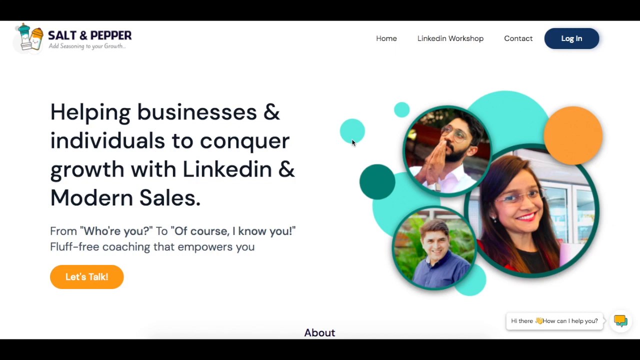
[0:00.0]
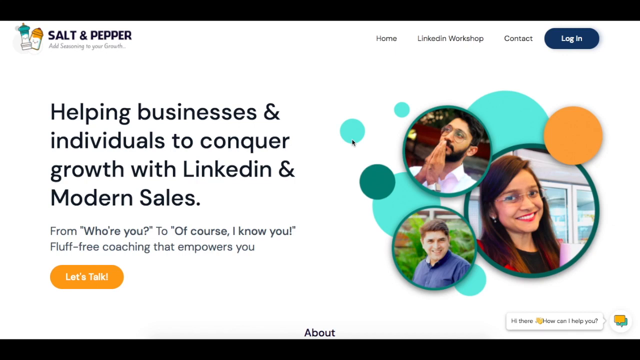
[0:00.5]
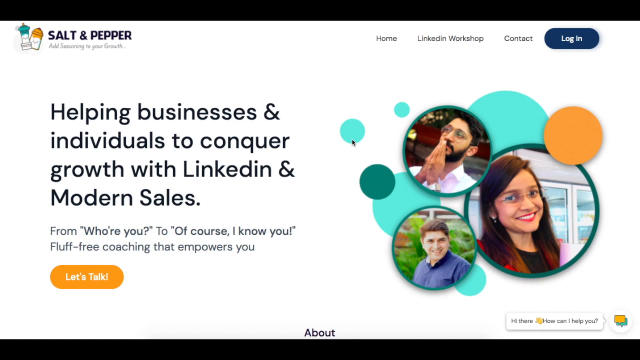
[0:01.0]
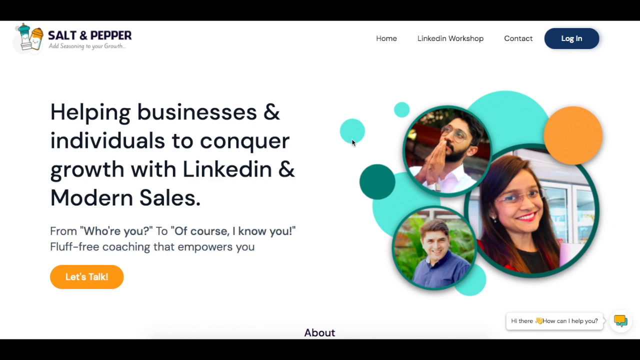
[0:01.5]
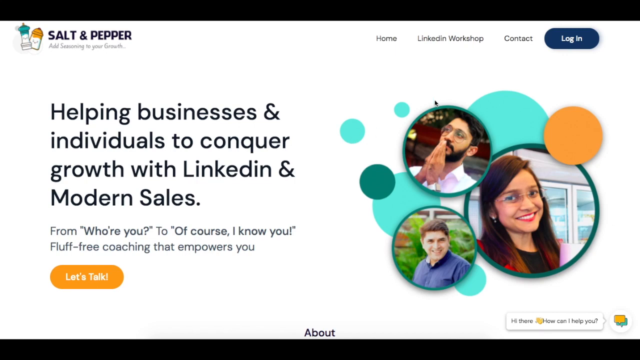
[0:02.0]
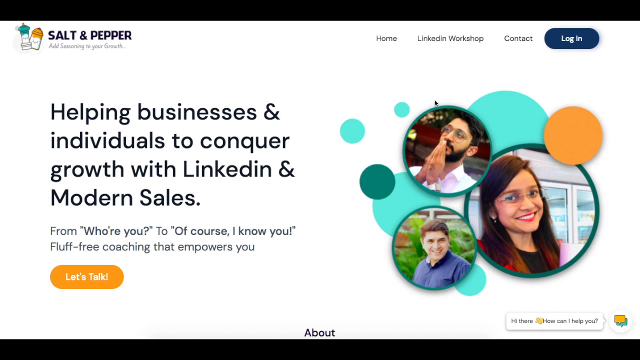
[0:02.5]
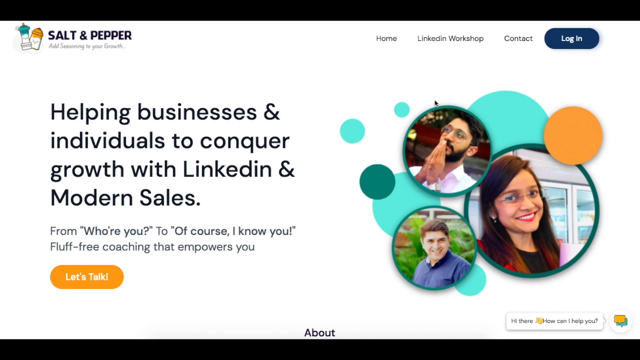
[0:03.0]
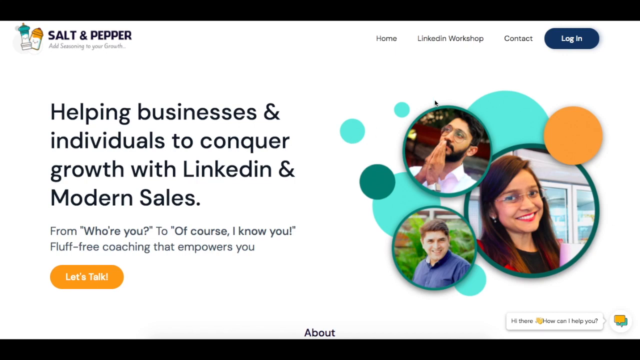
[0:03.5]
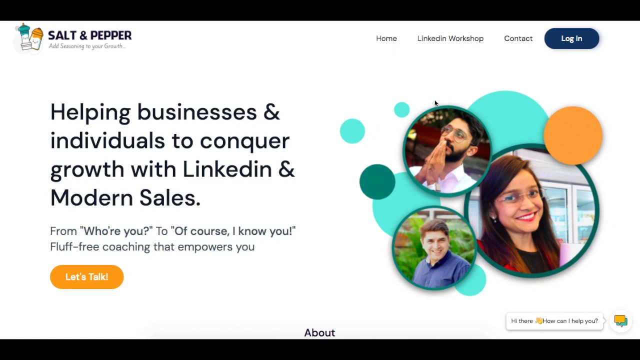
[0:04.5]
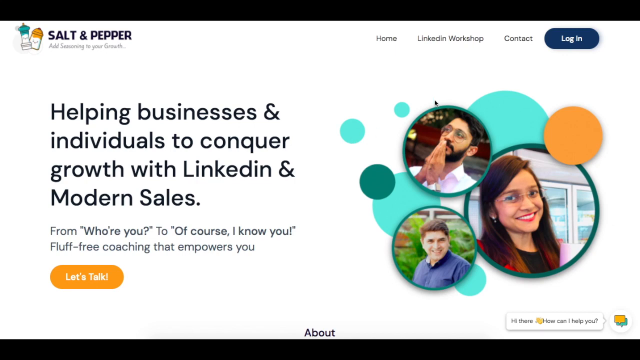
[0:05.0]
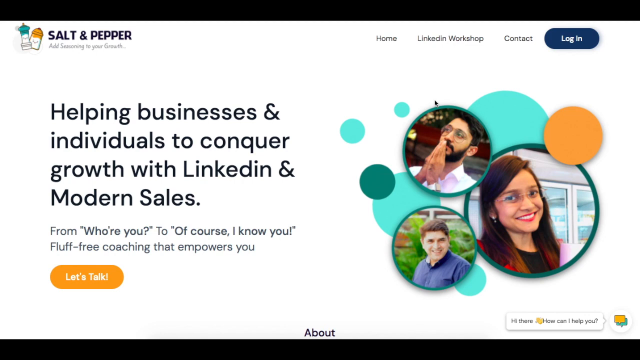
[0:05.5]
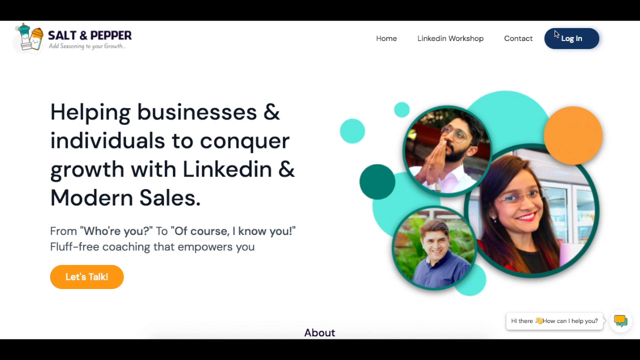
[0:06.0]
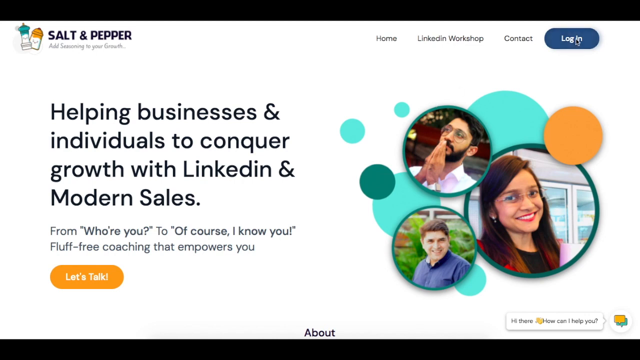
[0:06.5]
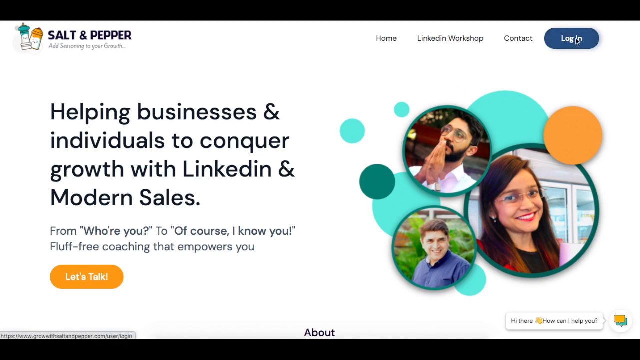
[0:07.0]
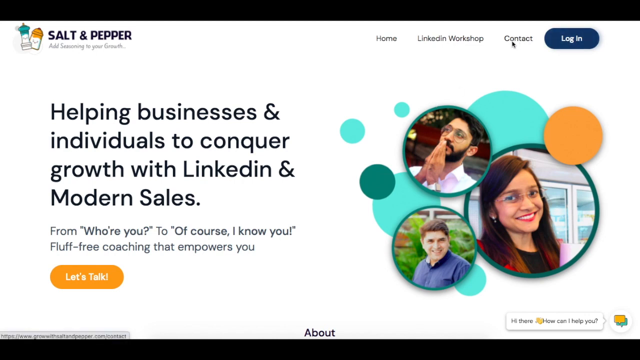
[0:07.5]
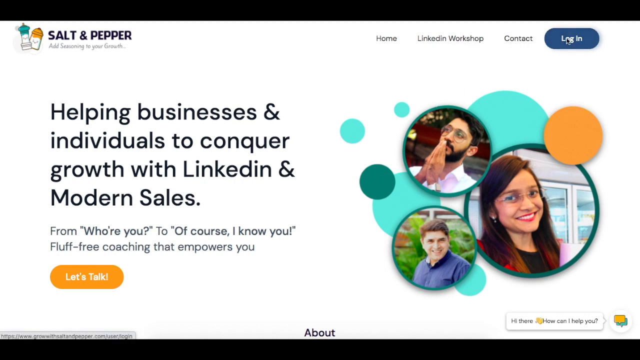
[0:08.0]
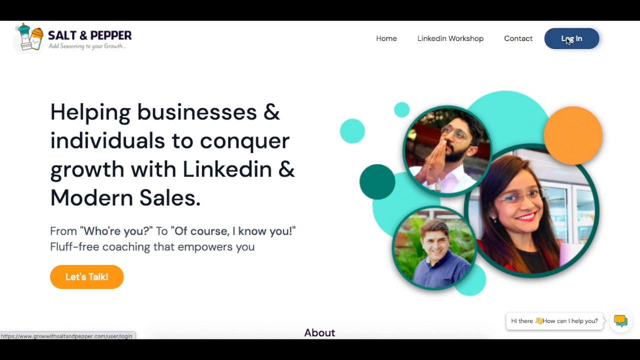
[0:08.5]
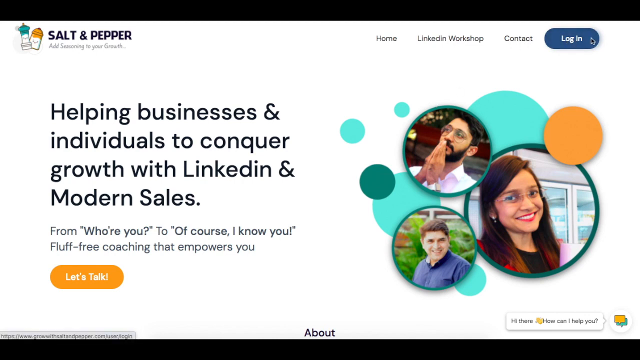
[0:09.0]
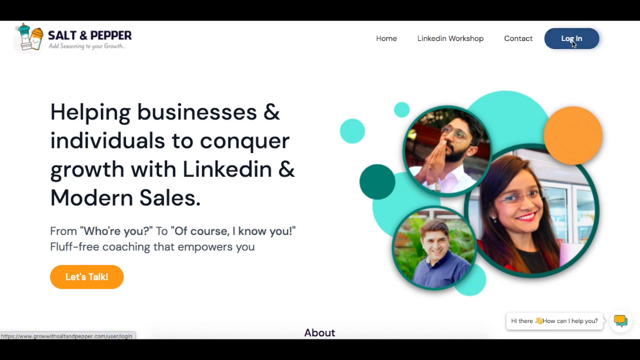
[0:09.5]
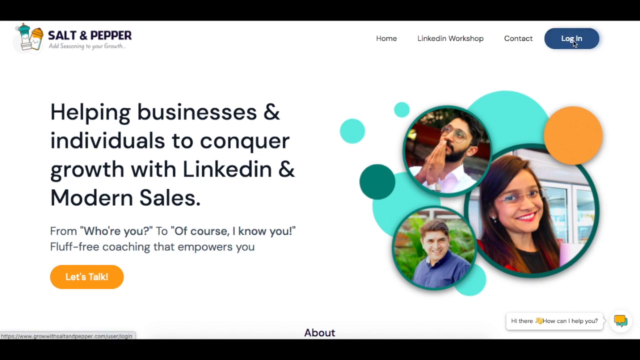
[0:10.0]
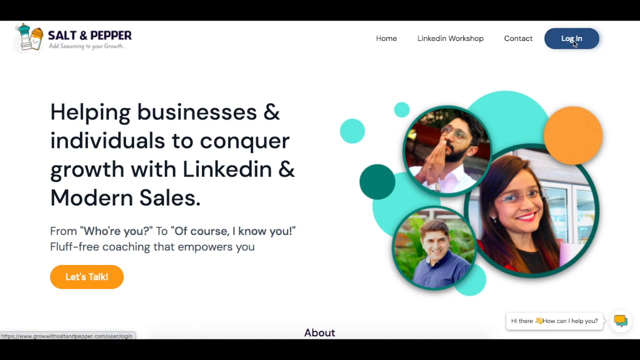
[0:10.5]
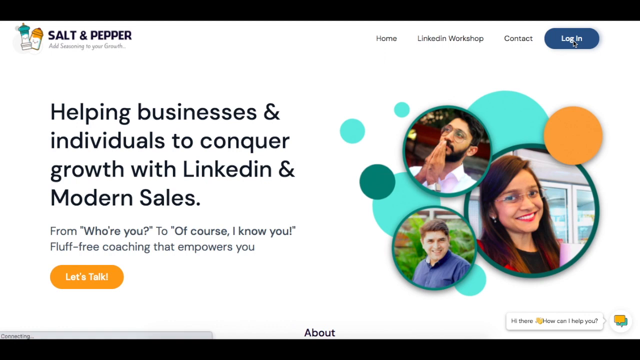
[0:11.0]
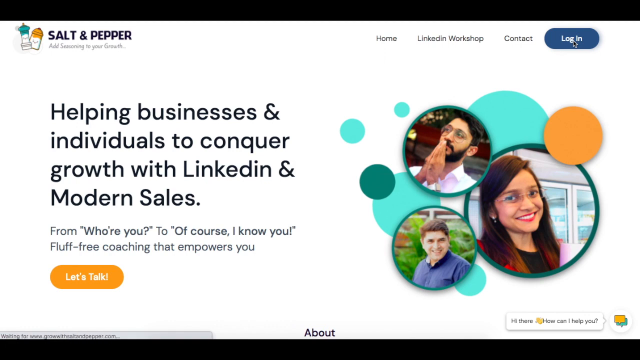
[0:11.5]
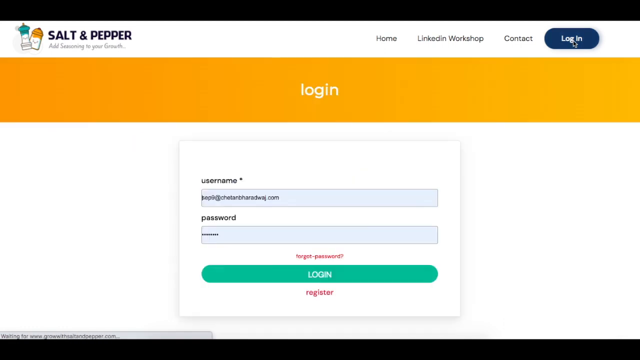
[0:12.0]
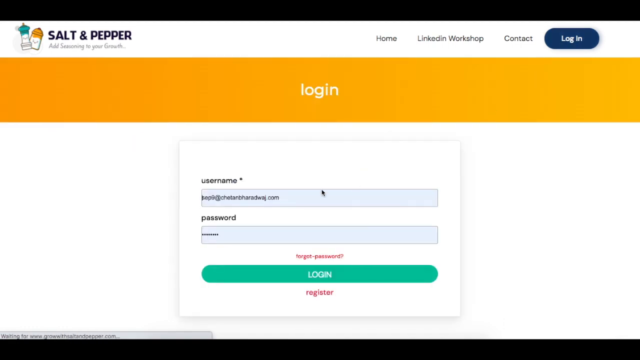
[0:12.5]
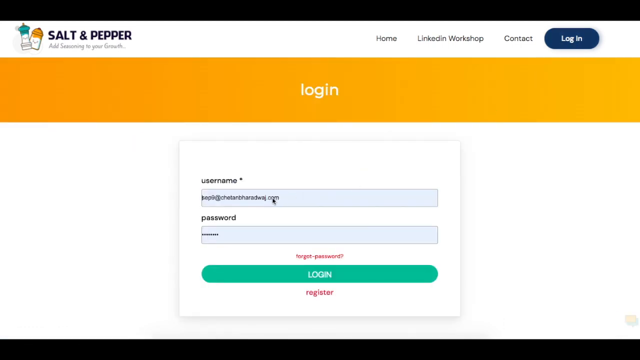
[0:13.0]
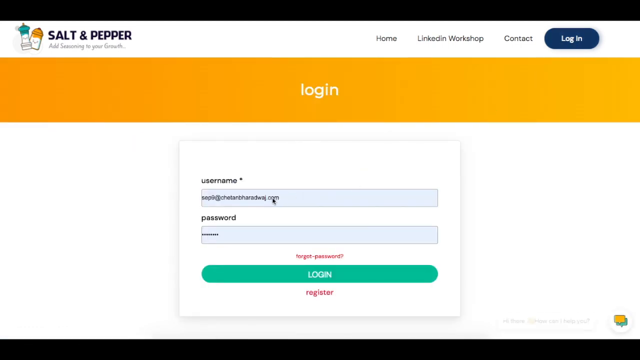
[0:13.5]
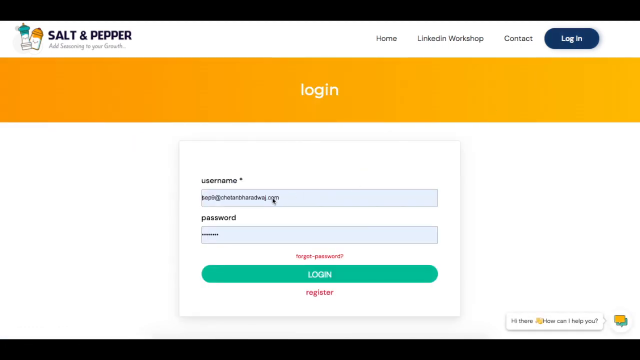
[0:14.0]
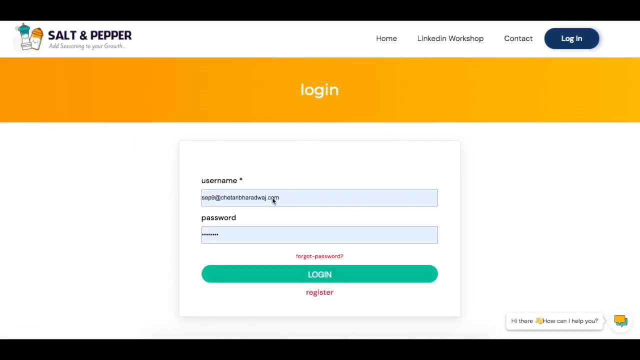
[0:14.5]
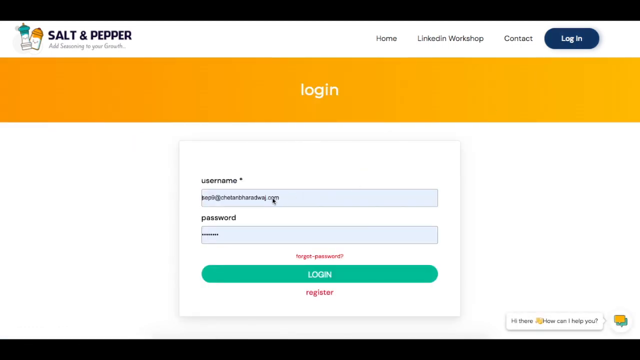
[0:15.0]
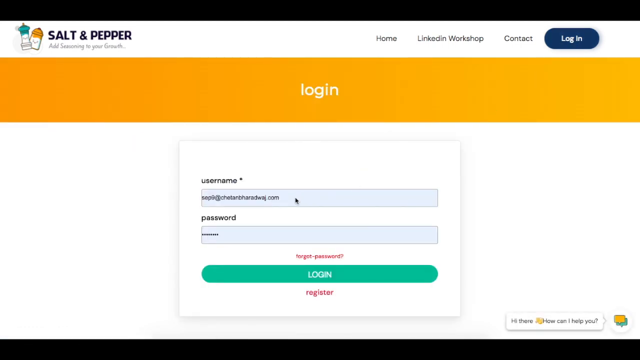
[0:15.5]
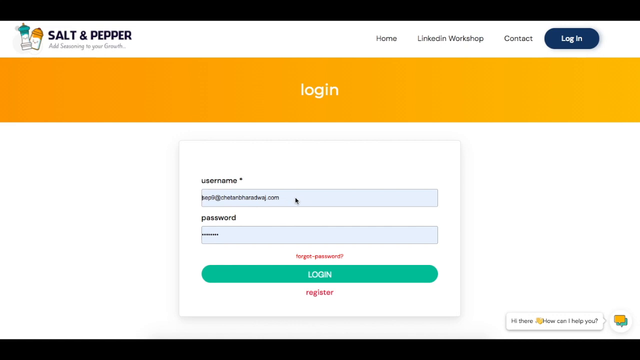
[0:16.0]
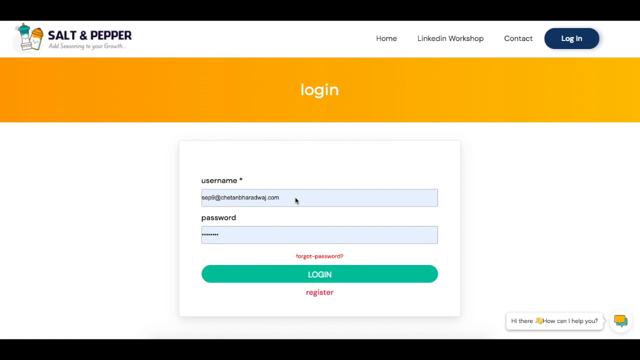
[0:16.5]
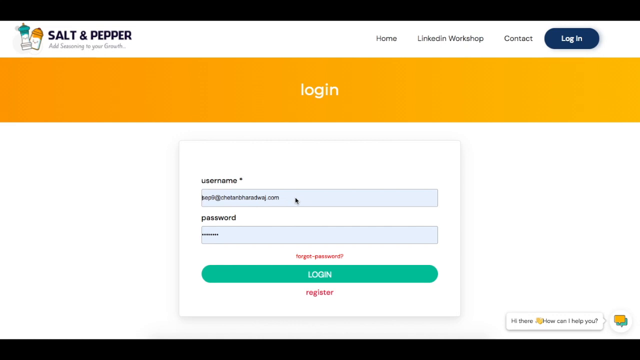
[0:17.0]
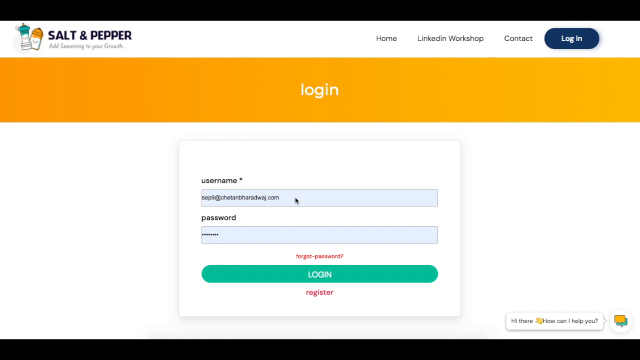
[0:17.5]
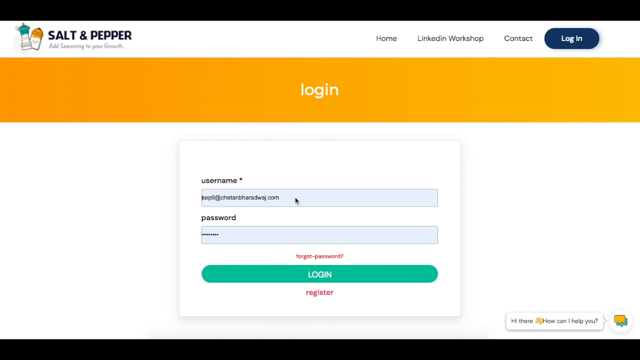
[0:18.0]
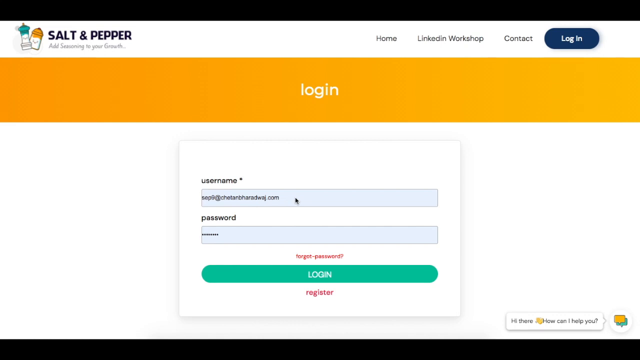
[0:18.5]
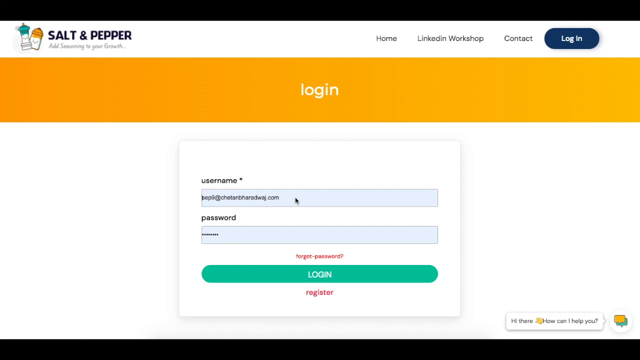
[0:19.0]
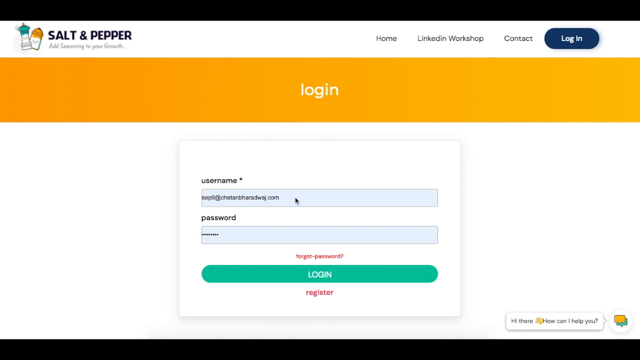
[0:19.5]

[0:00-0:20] The video shows the layout of the Salt & Pepper website, starting on its main landing page. The background is white. At the top left is the logo "Salt & Pepper" in black, all-caps letters, with salt and pepper shaker graphics to the left of the text logo. On the middle left side of the page is the text "Helping Businesses and Individuals to Conquer Growth with LinkedIn and Modern Sales," and below it, "From Who Are You to Of Course I Know You, Bluff-Free Coaching That Empowers You." To the right of that, in the middle of the page, are circular photos of three individuals. Someone appears to be walking through how to use the website: the cursor goes up to the top right and clicks login, which opens a login page with entries for a username and a password and an option to log in. The cursor then clicks the login button.